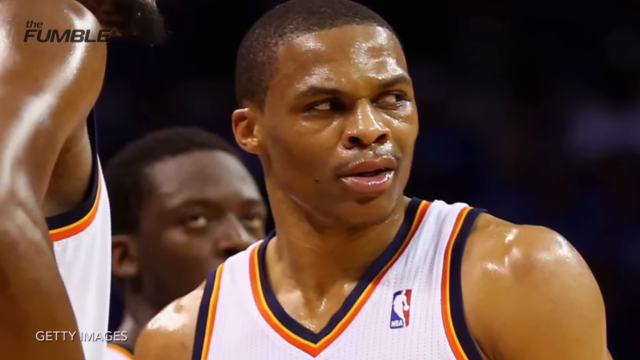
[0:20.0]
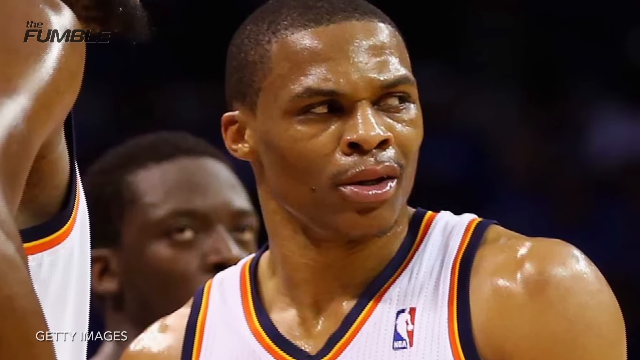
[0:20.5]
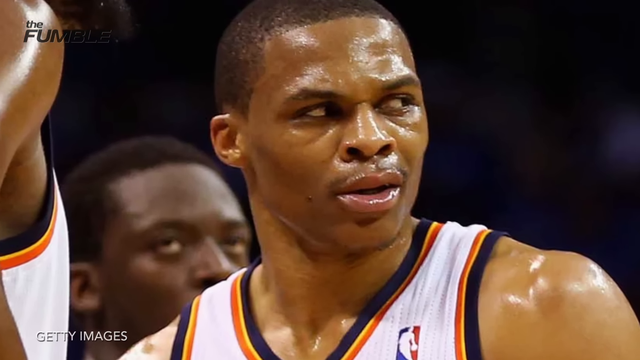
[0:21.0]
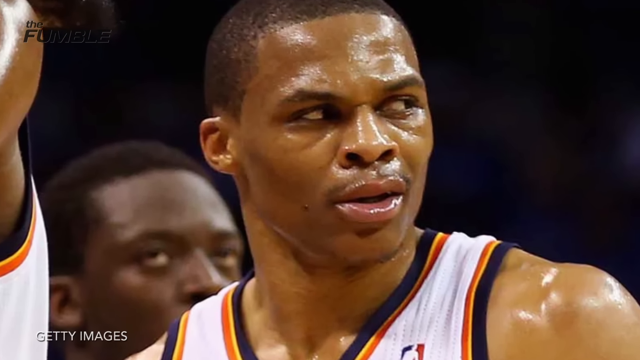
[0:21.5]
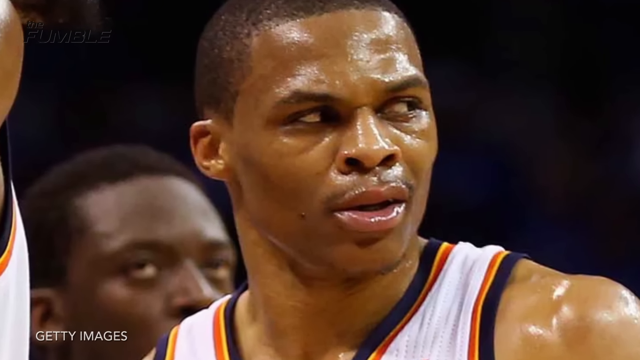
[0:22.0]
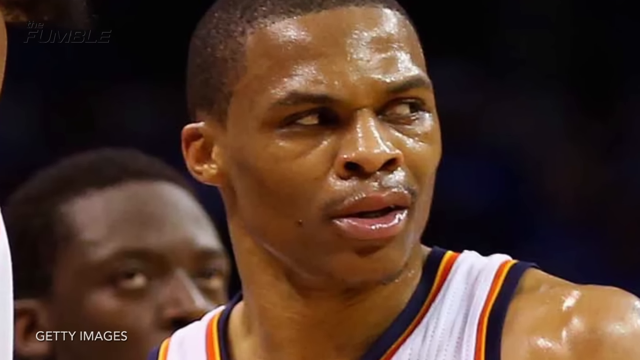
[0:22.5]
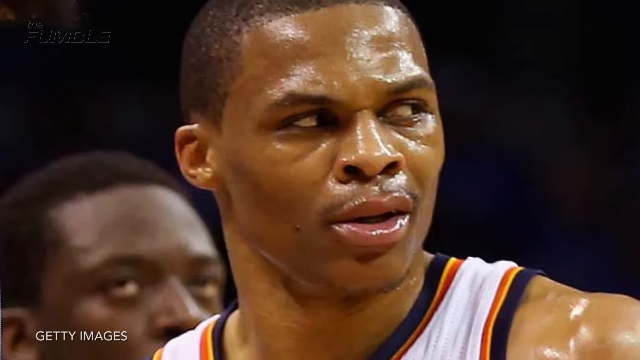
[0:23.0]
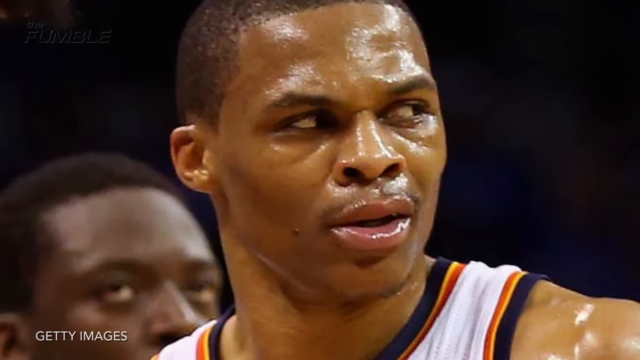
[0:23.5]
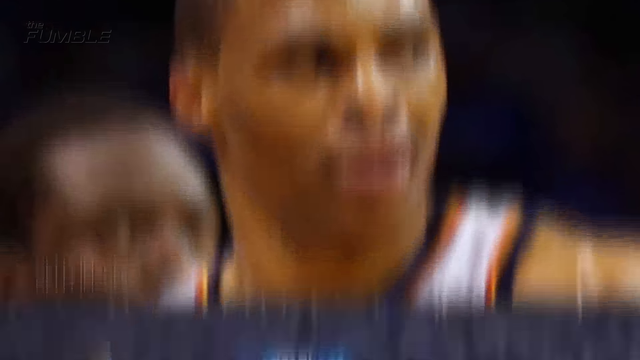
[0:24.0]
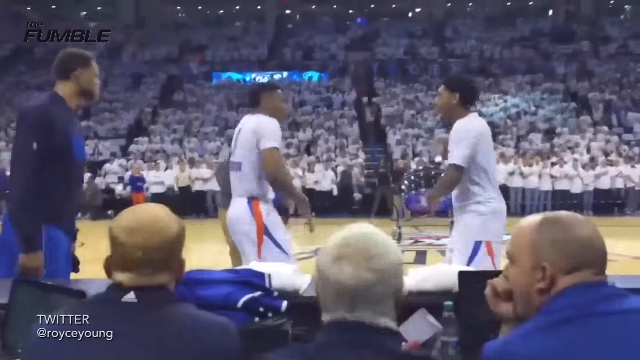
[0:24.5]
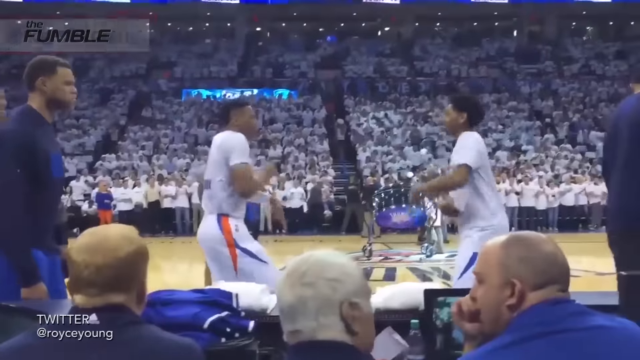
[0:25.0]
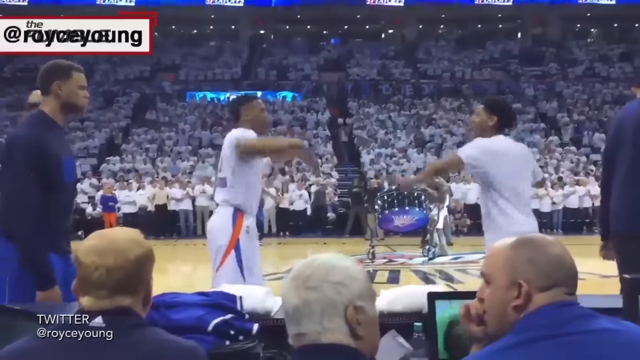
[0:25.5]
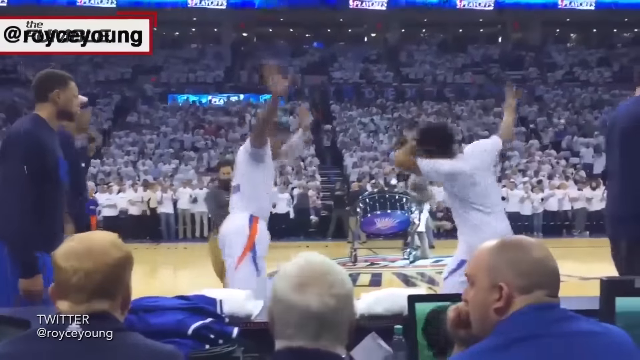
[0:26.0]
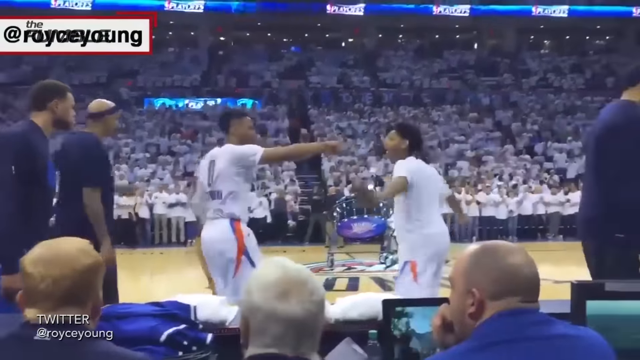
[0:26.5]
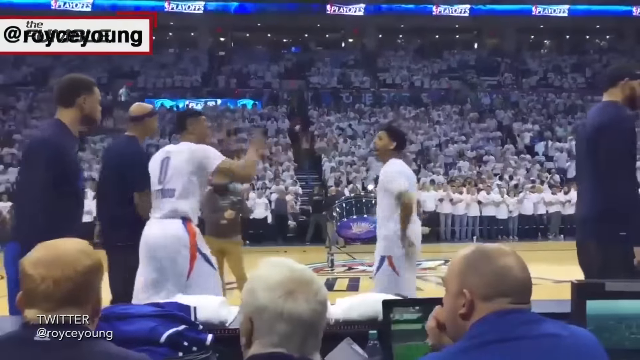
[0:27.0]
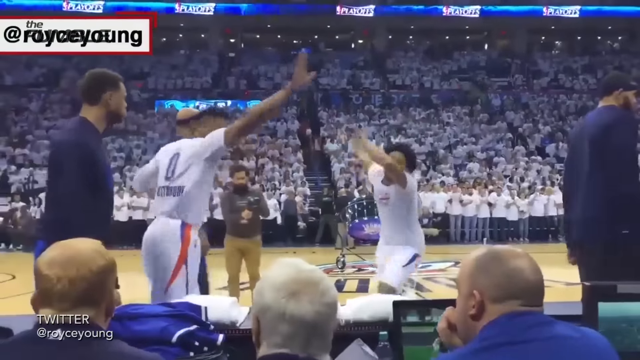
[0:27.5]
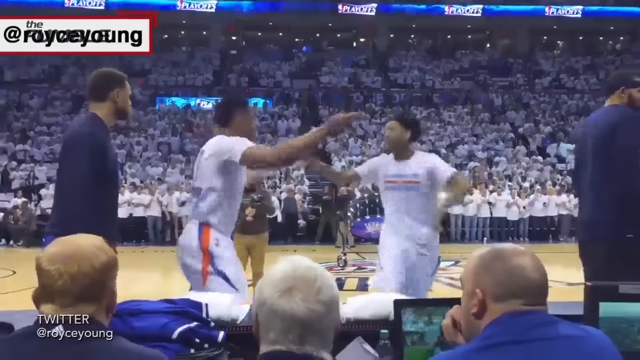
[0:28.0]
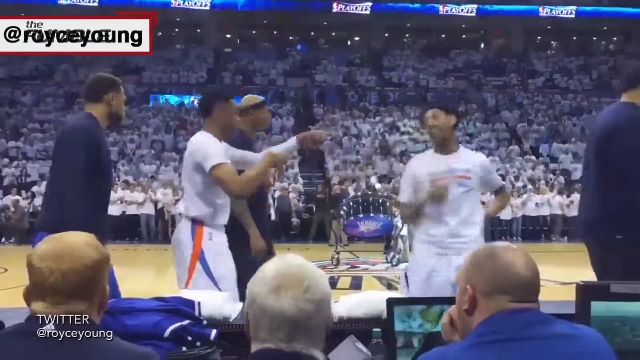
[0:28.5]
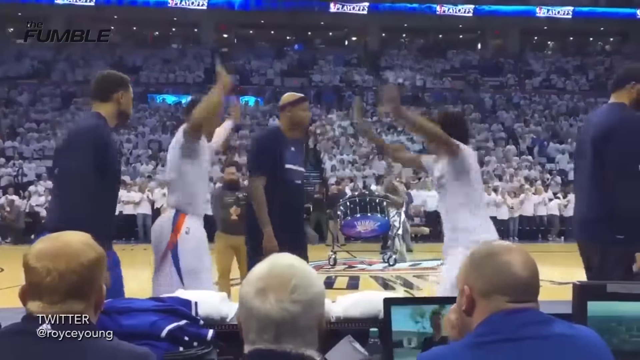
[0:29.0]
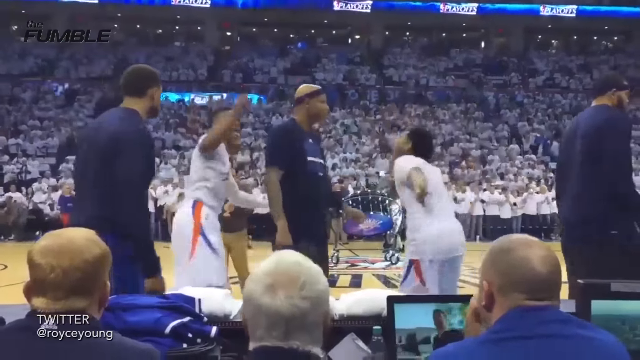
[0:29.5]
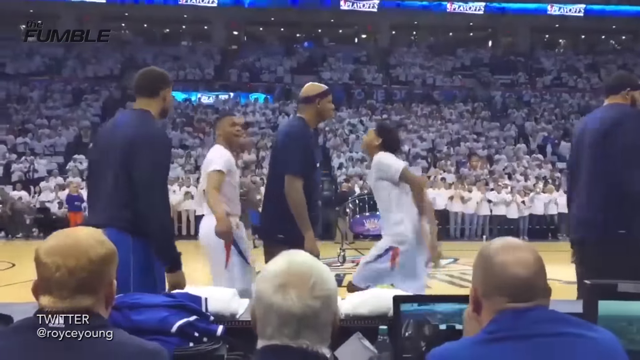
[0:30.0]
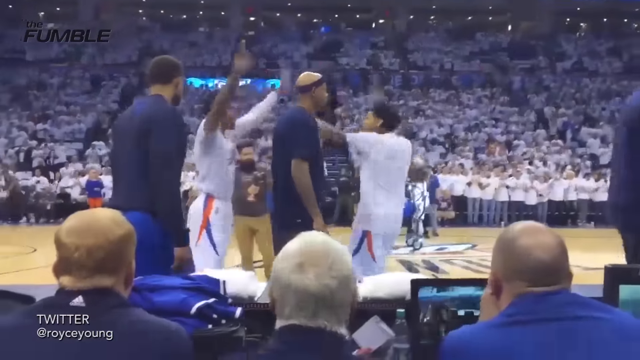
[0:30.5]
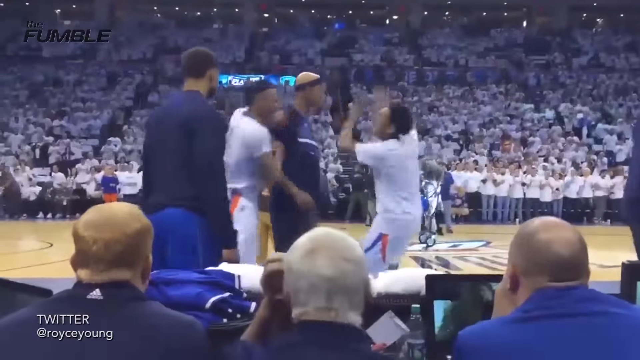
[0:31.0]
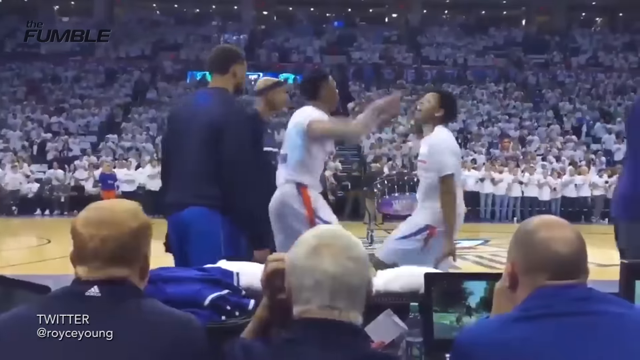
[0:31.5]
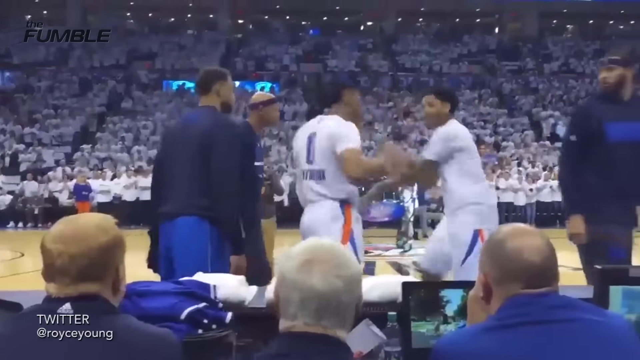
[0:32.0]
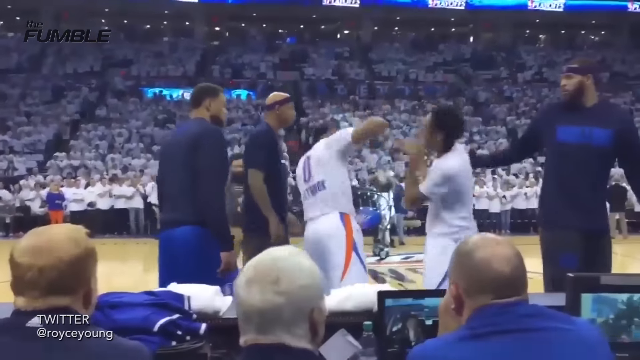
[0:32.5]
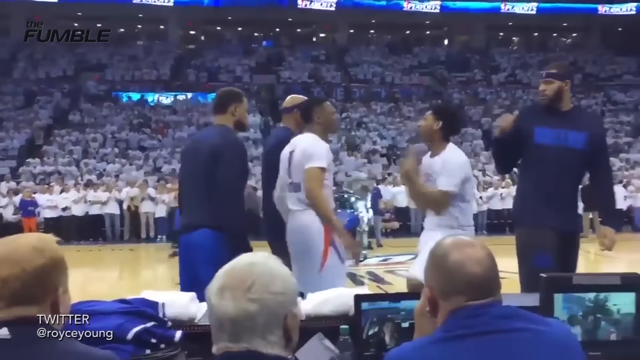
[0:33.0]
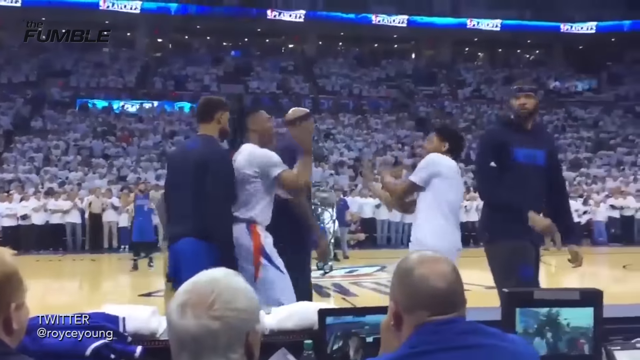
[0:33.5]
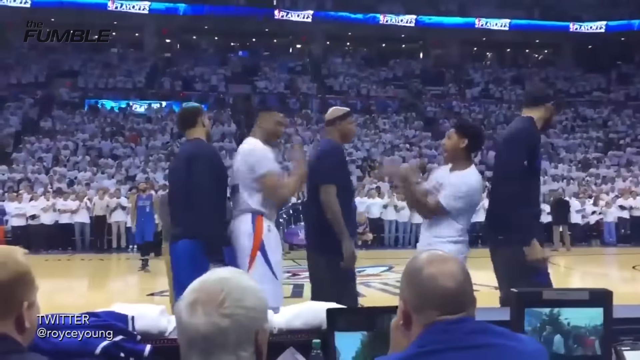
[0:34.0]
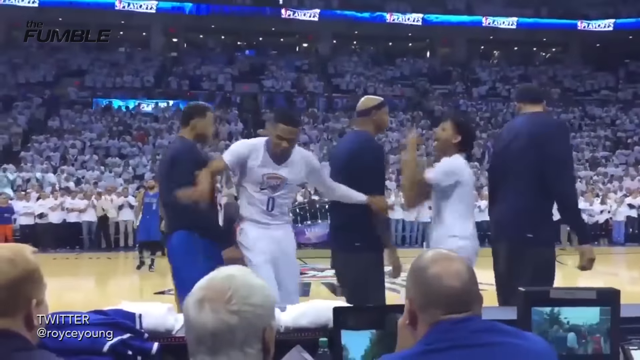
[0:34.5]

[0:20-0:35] A close-up shows a Black basketball player in a white uniform. Two men in white uniforms then do something that looks like a dance, possibly the pre-game dance. Both appear to play for Dallas, though their numbers are hard to make out; they seem to be dancing before a game begins. The footage goes back and forth between the two men dancing and a close-up of what looks like one of them. They are in a sports arena with a crowd of people in the stands. Three men in different-colored sweatshirt outfits stand around them, basically doing nothing, sort of pointing in. They are possibly on the opposing team and look somewhat annoyed.